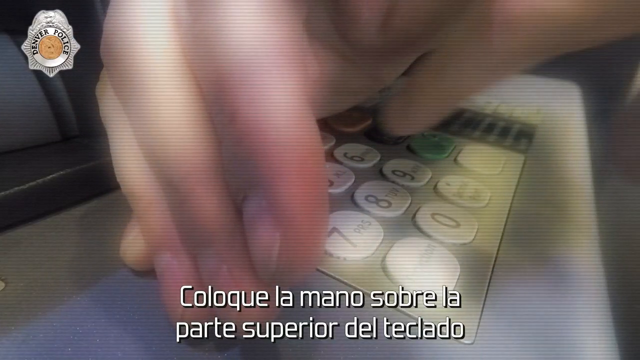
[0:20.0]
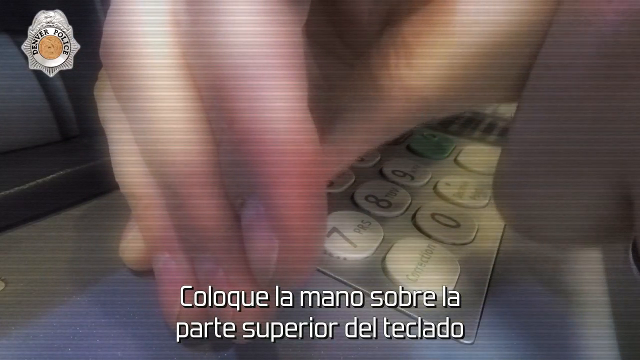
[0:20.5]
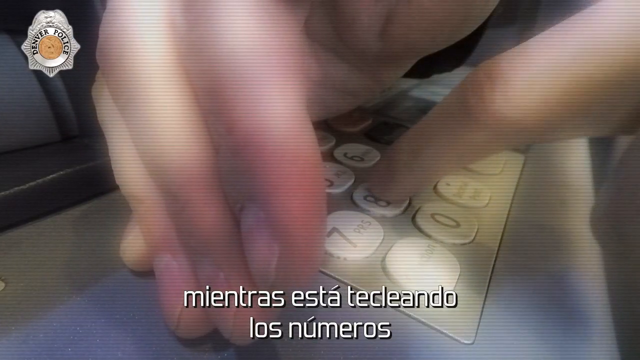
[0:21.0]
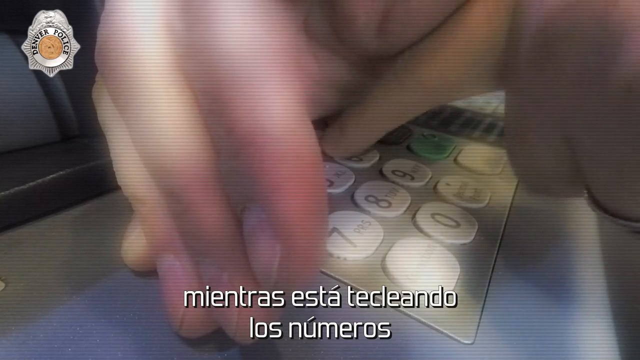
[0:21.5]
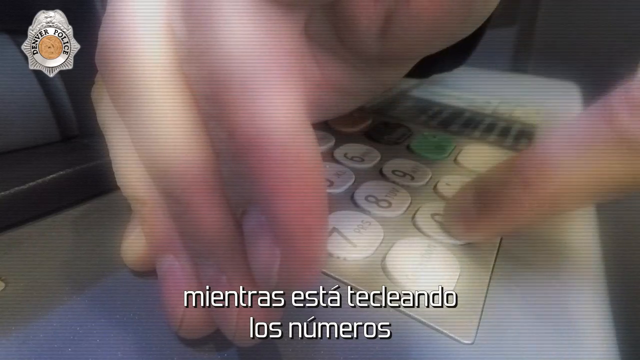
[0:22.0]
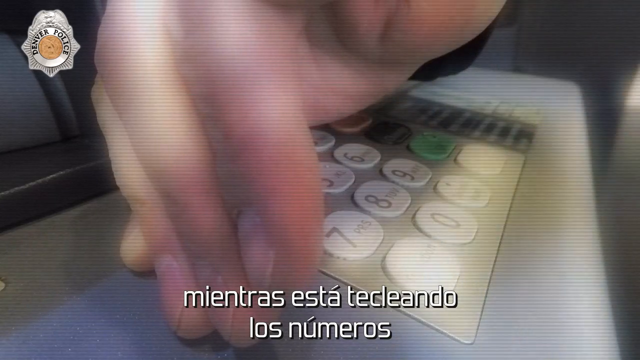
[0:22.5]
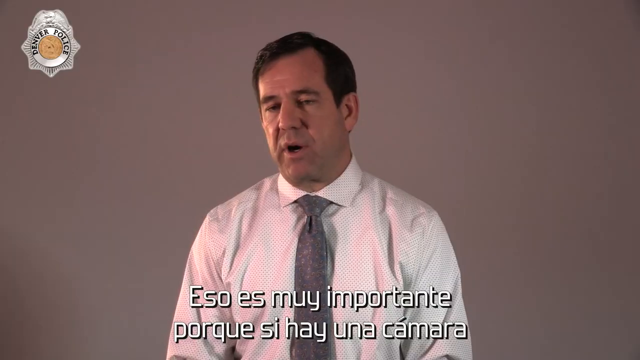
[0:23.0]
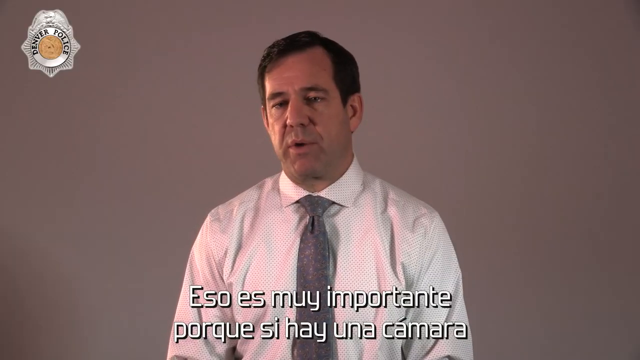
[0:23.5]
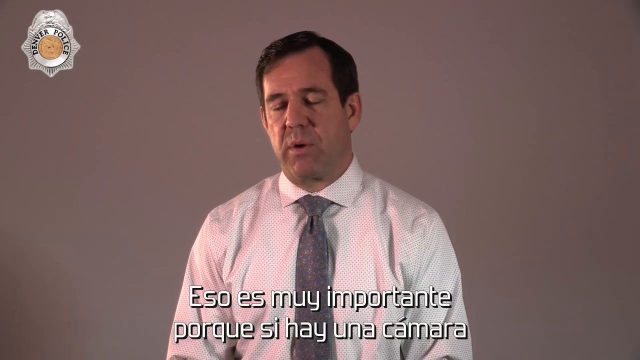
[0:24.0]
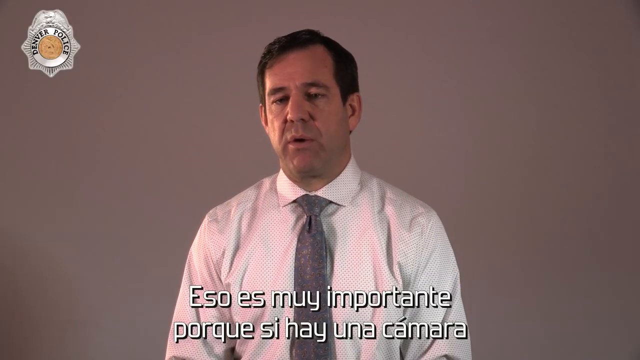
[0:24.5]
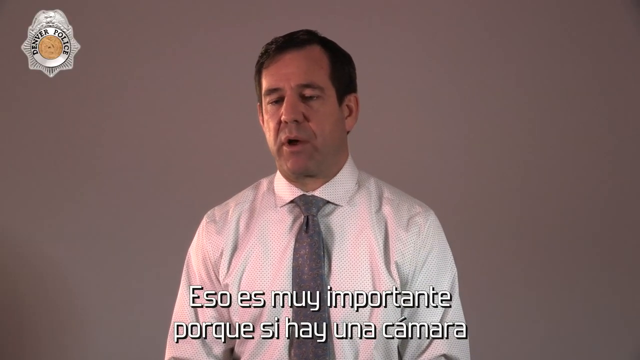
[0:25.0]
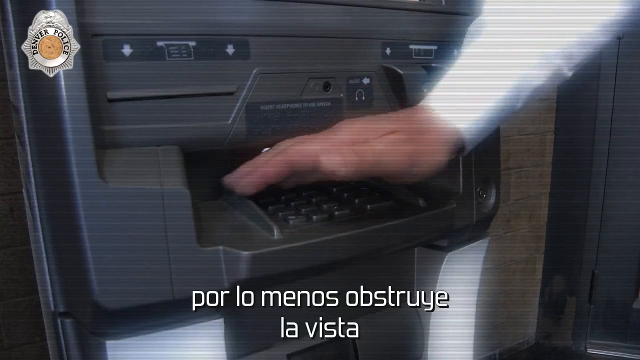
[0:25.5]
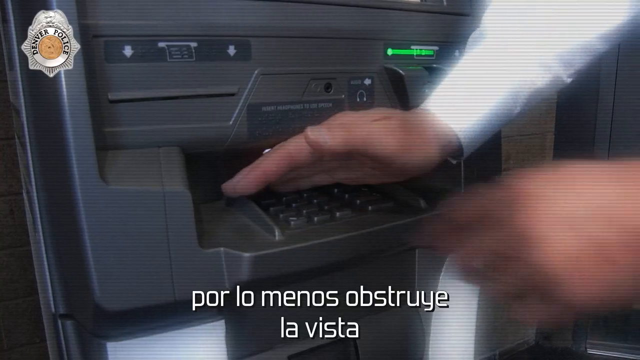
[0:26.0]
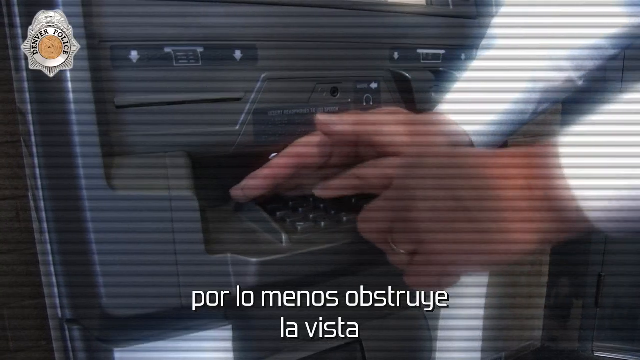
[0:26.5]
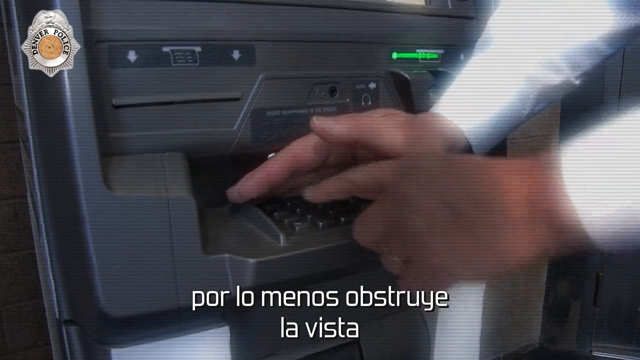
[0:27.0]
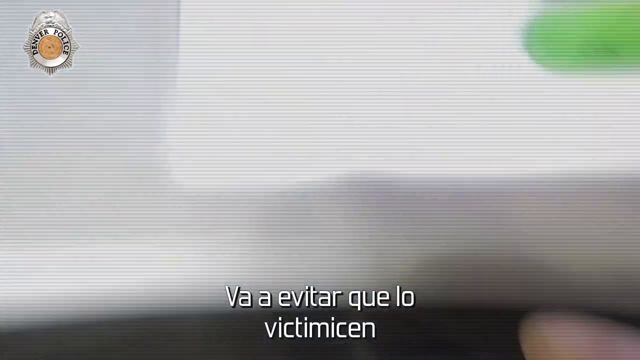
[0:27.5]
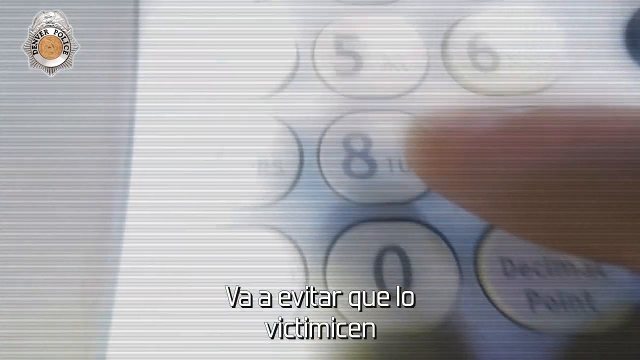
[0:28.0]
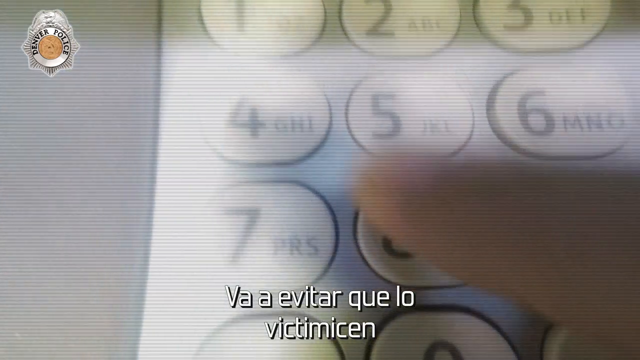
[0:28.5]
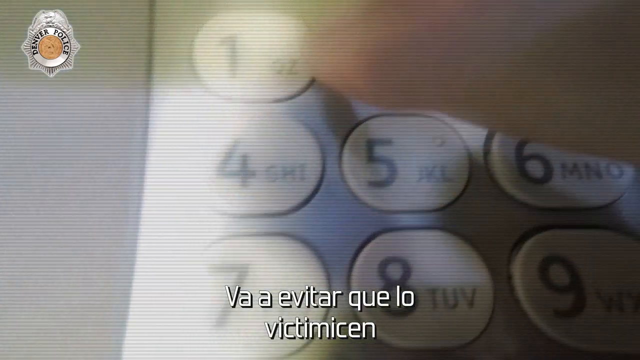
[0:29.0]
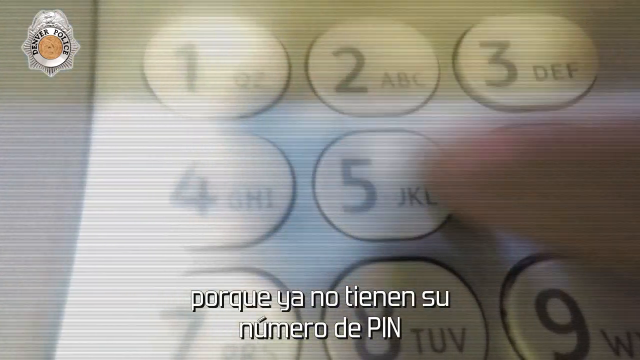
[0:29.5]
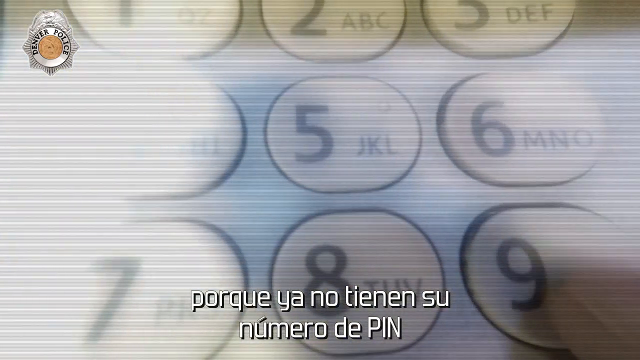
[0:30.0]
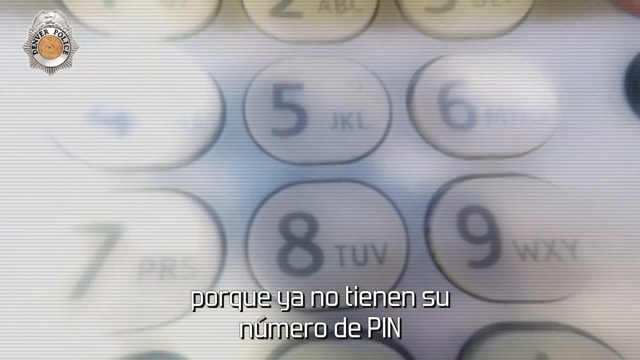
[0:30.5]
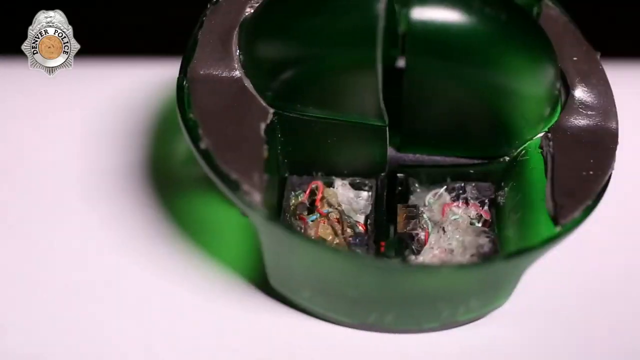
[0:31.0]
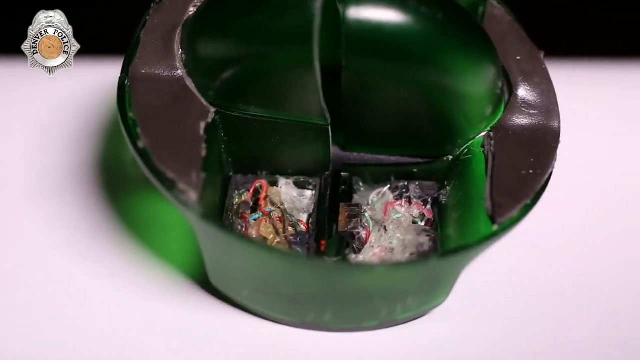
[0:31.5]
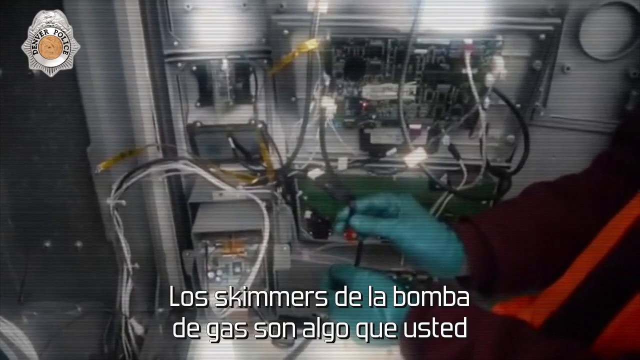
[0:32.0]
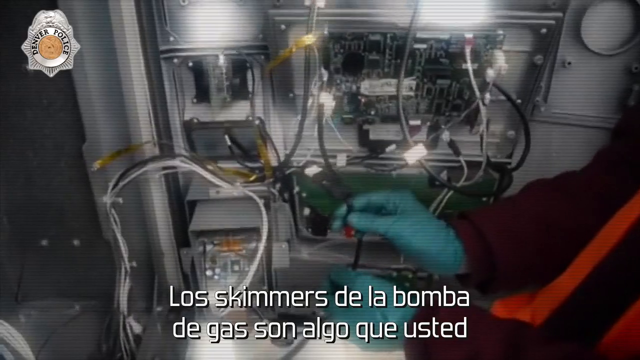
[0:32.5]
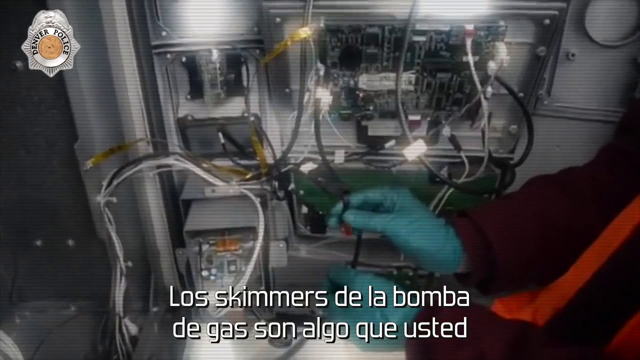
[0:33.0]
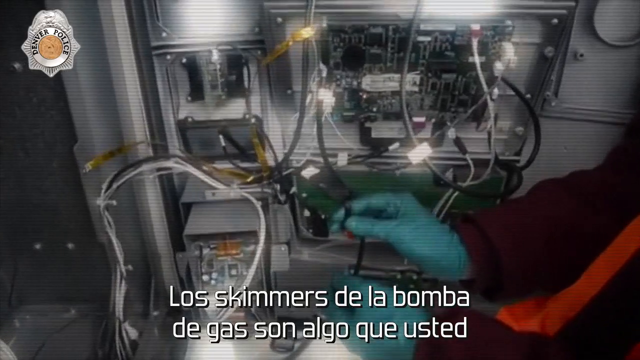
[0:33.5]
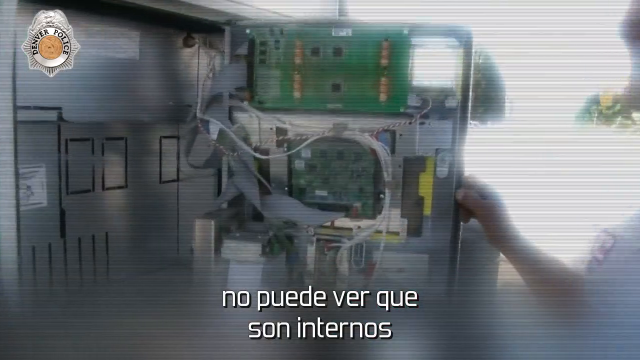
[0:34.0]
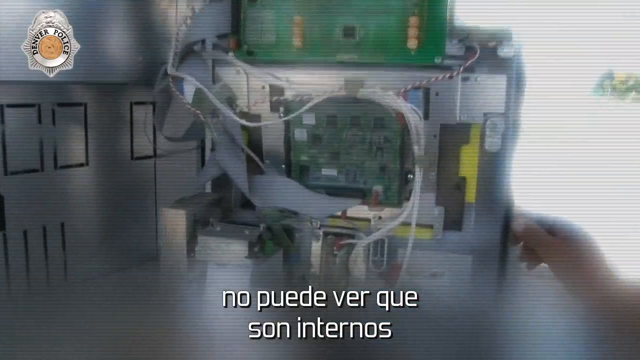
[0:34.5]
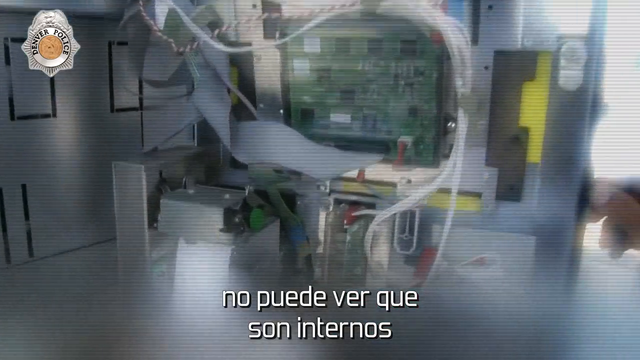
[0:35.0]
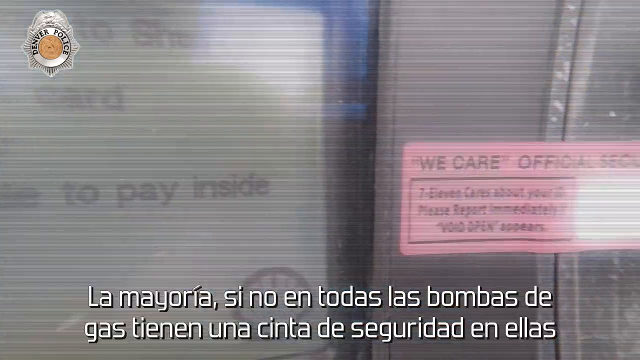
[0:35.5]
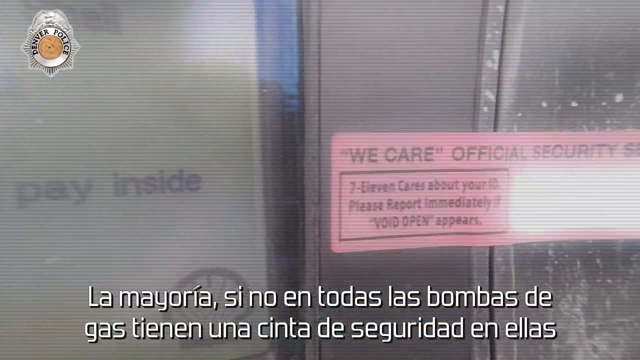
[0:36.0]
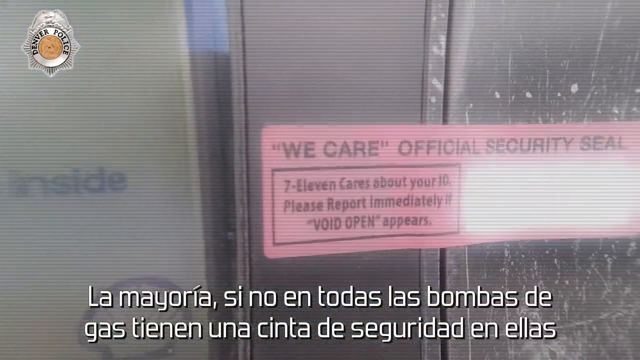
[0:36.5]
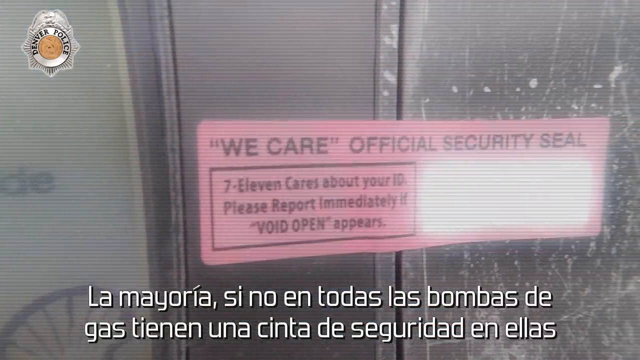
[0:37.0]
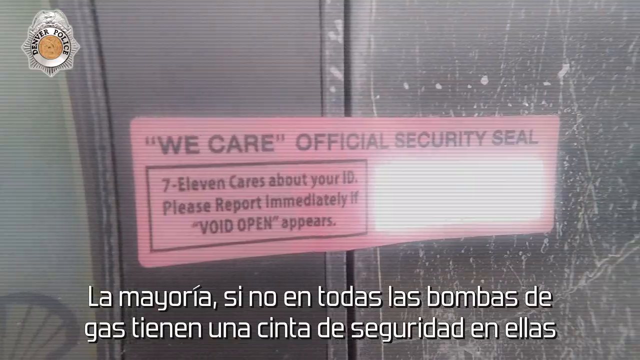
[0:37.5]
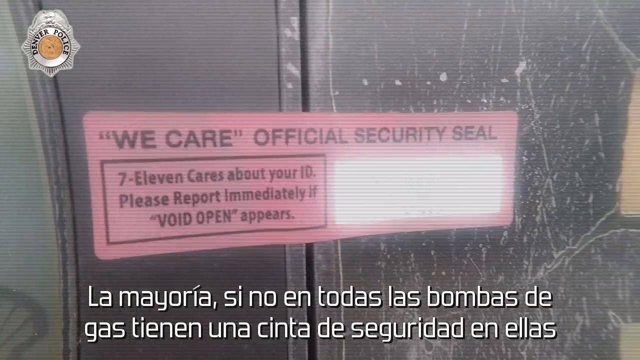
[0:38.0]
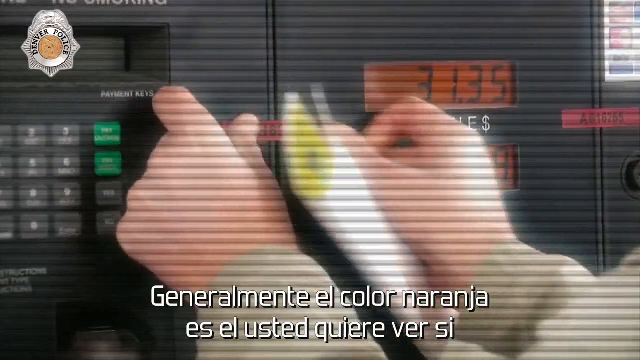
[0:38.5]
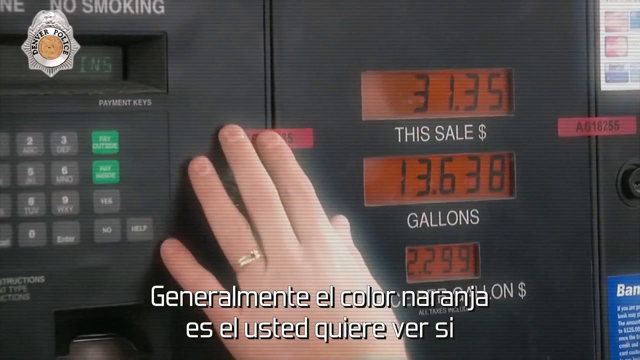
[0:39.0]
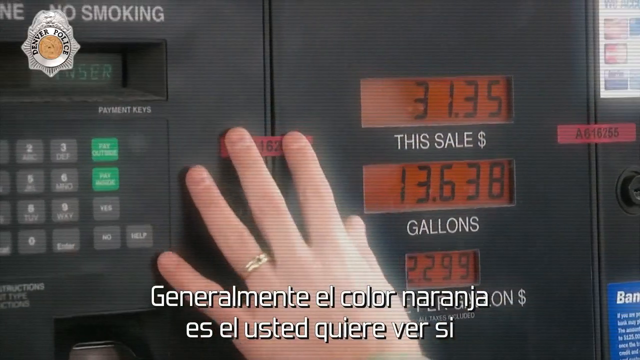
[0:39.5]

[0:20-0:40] The middle-aged man in the suit has black hair and wears a blue tie, a white shirt and a ring as he talks. A gas station machine, the part where a credit card is inserted to buy gas, is opened and its inside is shown: tons of wires and metal, with green wires and a silver, mechanical-looking interior. A small security seal is put on the machine, apparently so people know it has been checked. The machine is closed after being looked at. 8419 is the number the man uses as a PIN.